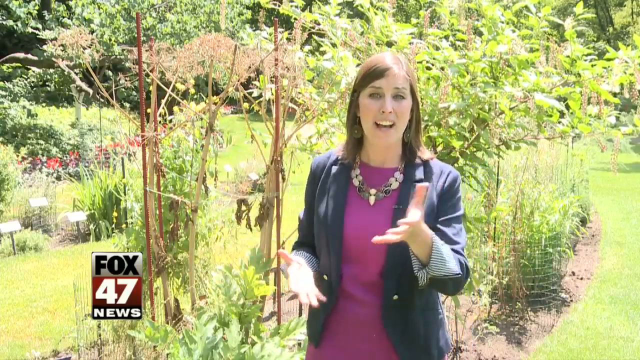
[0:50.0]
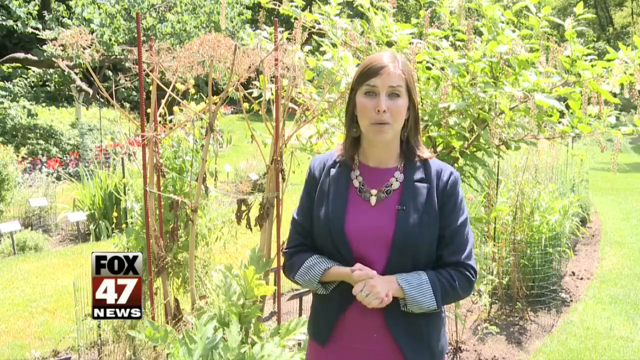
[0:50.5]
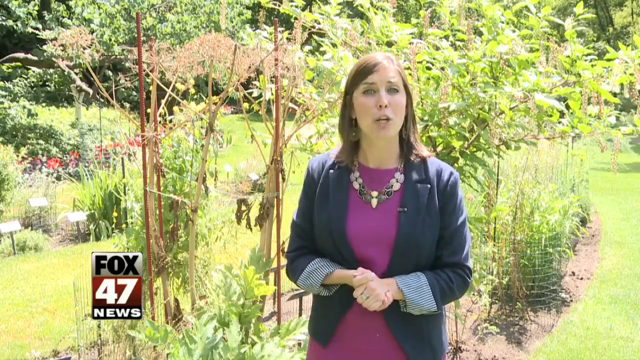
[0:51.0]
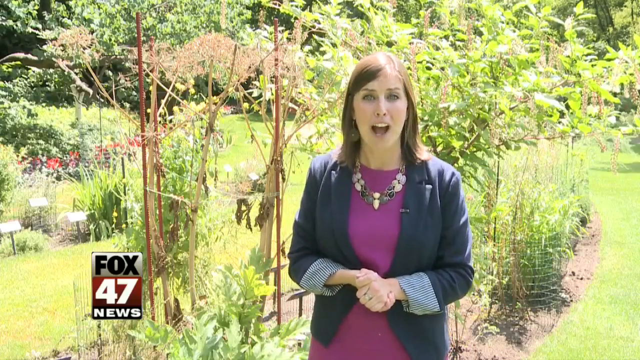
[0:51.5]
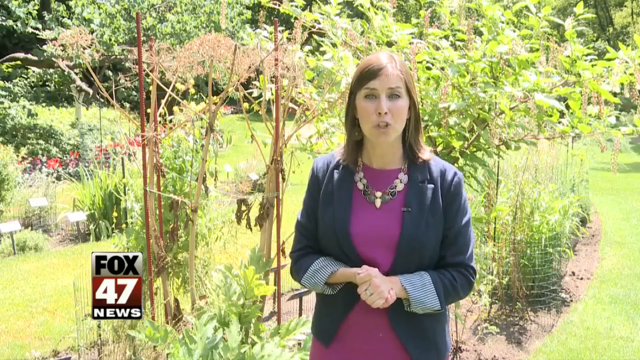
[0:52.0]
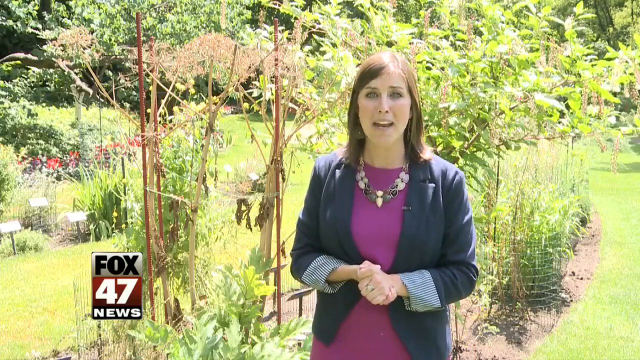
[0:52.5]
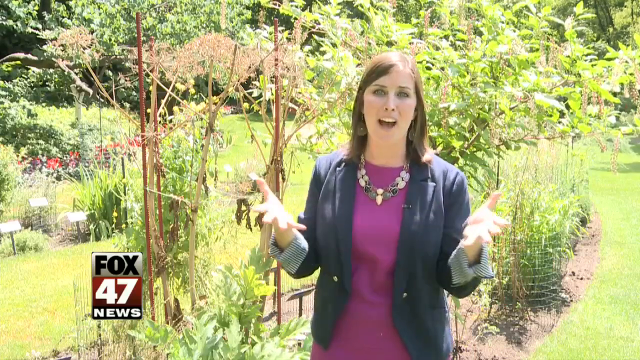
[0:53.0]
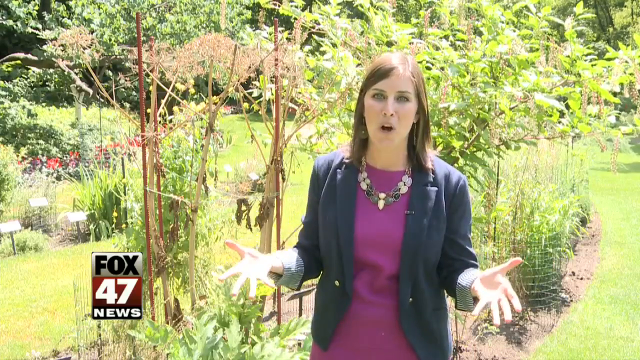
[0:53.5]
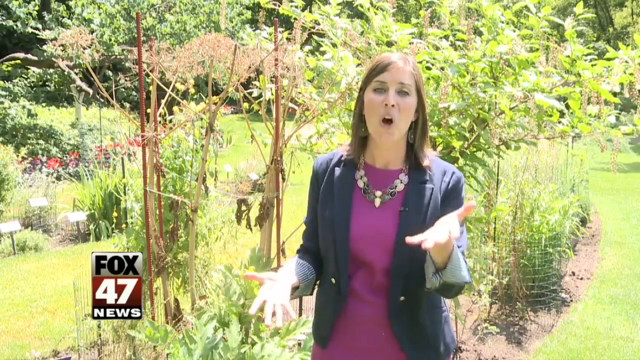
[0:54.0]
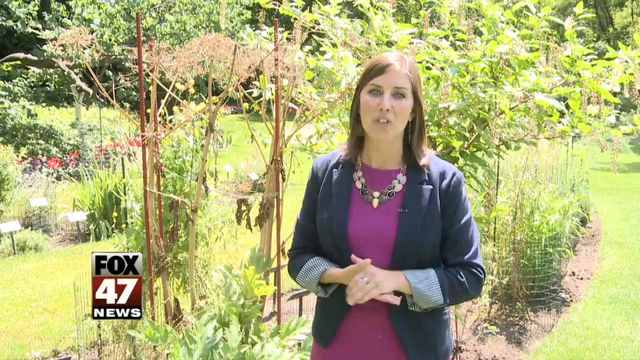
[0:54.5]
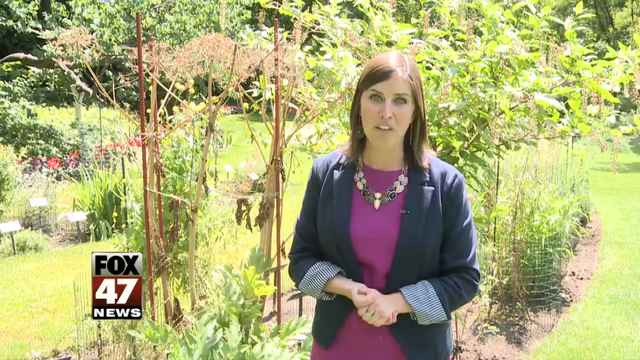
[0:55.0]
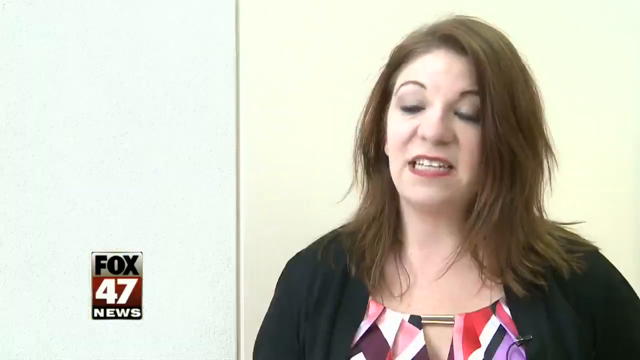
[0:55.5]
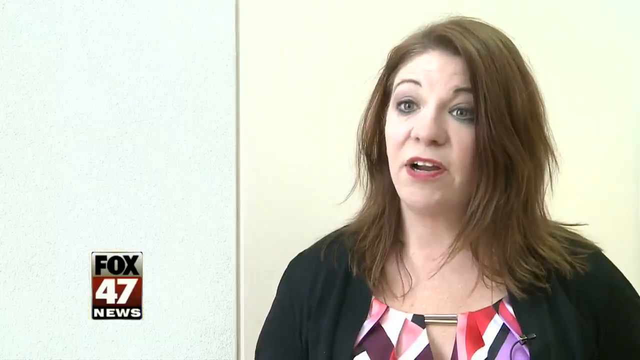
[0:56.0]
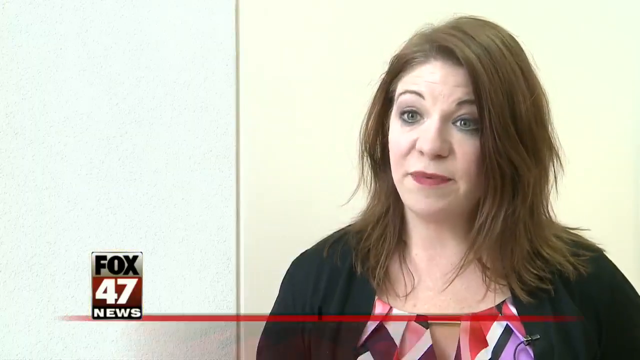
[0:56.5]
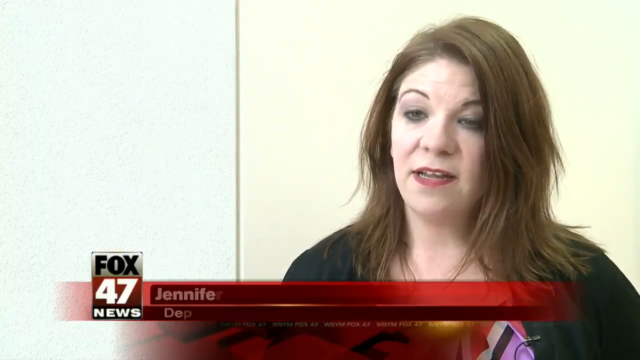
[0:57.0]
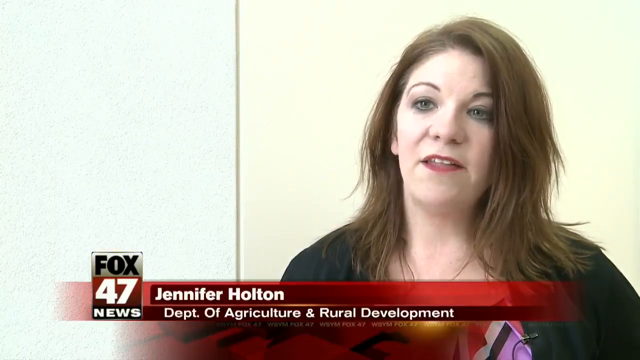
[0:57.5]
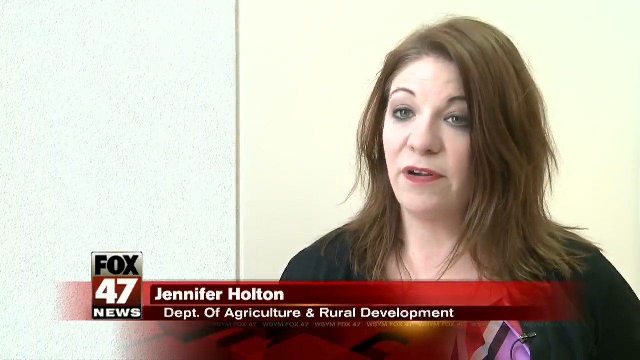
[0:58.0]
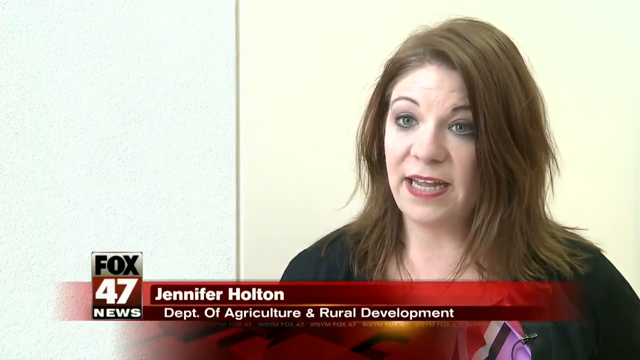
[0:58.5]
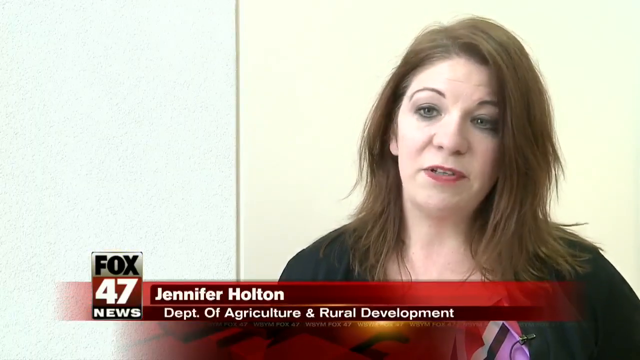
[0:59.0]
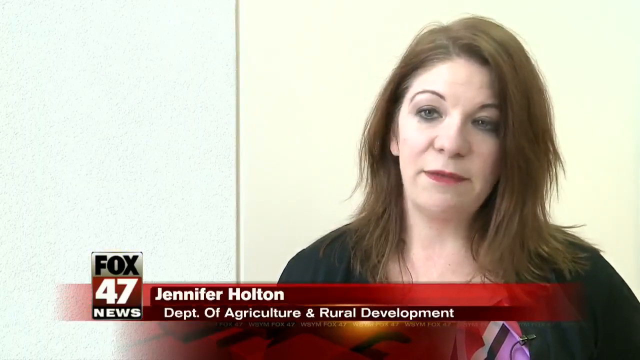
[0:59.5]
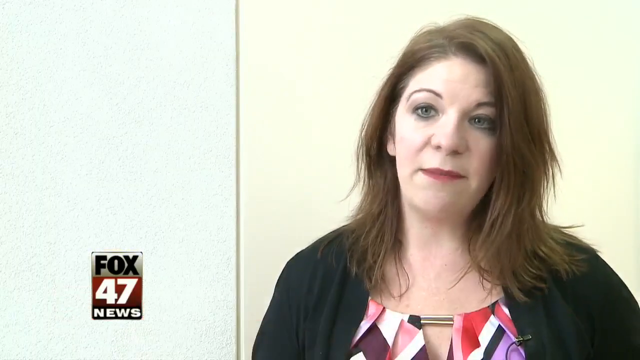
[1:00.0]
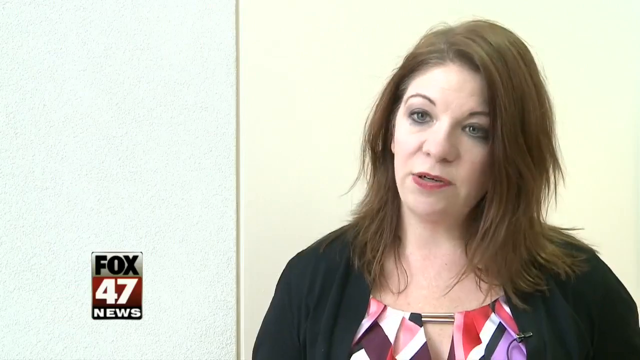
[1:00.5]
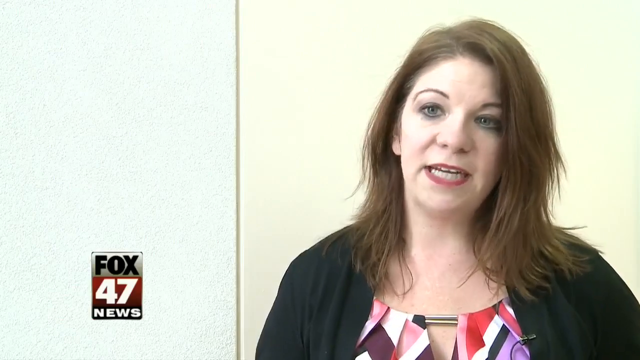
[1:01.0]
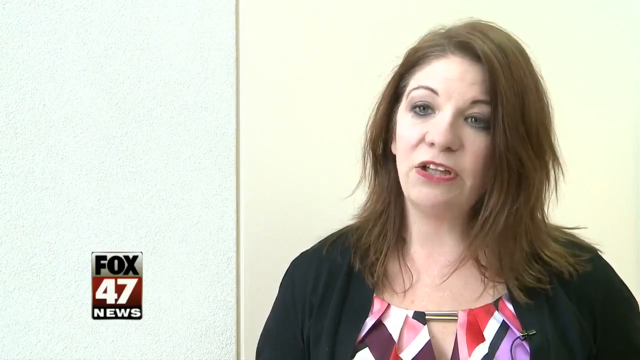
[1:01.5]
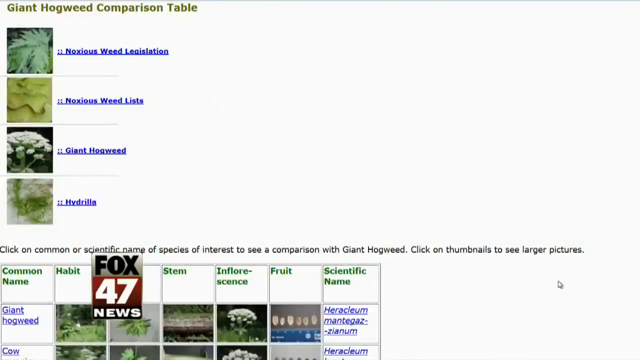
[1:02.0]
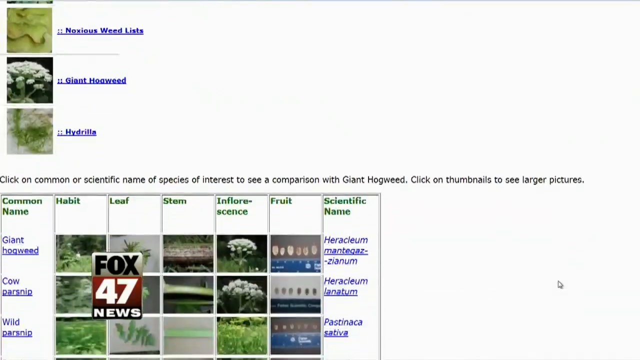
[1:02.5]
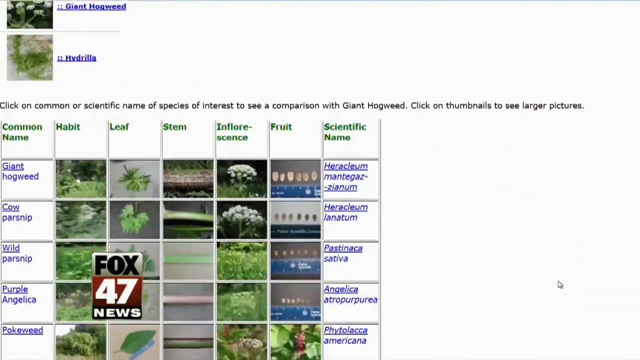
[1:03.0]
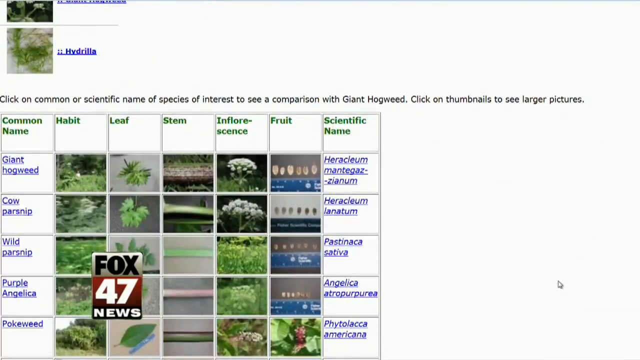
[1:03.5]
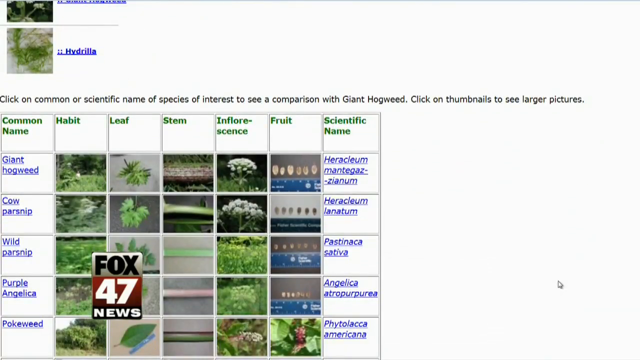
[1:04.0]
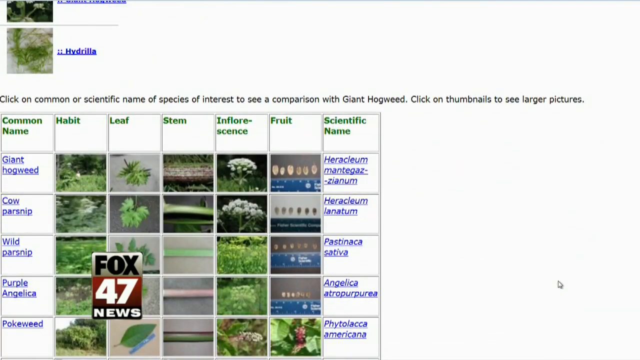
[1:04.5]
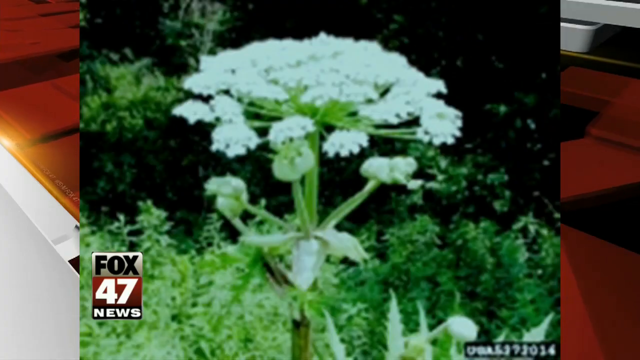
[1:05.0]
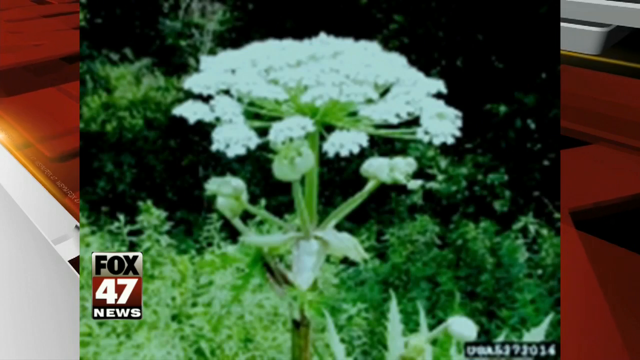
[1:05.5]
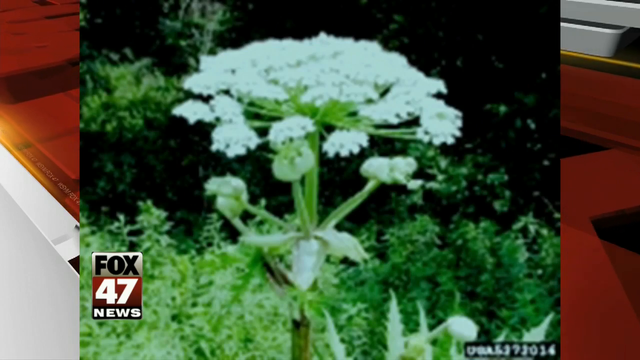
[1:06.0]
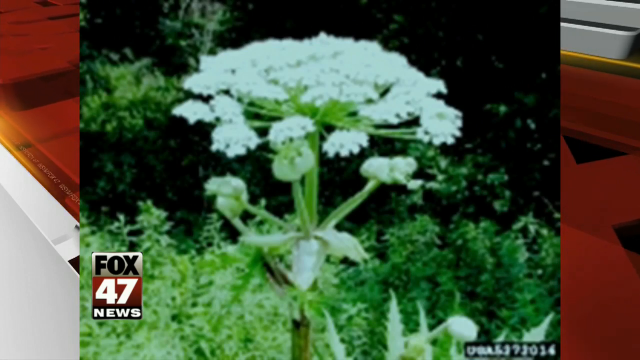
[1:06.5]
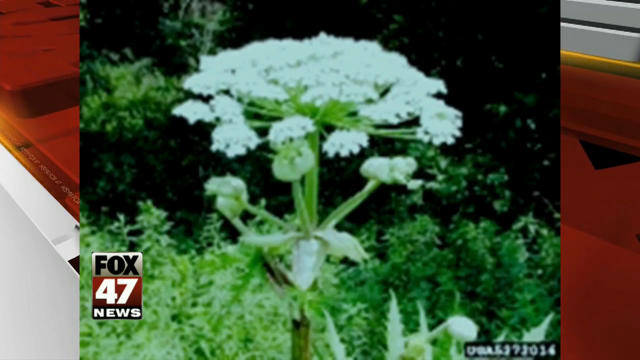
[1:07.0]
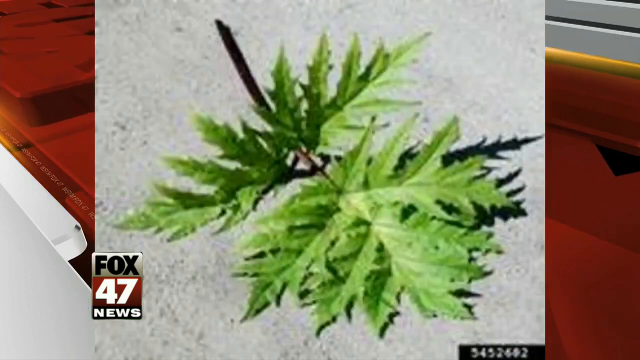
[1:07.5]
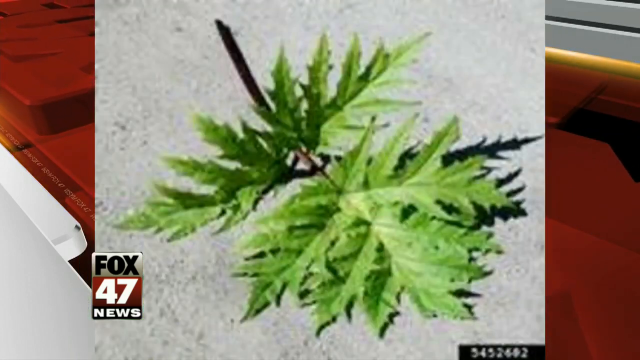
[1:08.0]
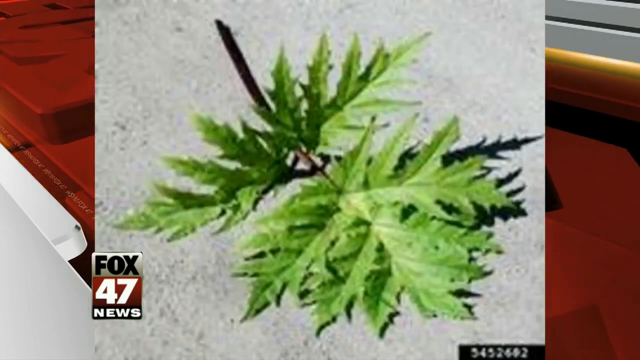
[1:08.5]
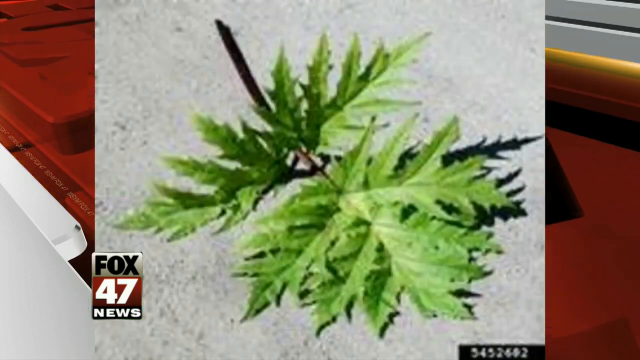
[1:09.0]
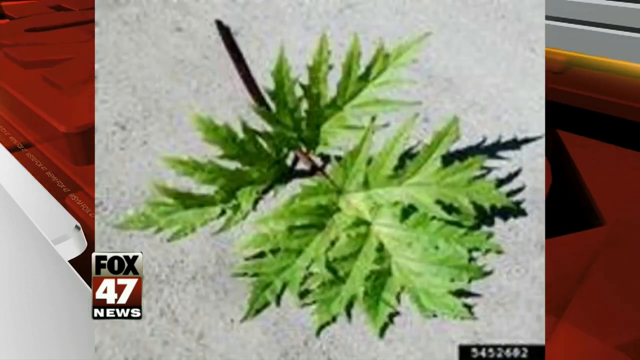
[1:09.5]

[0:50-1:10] A Fox 47 News reporter in a blue coat, purple shirt and gold chain speaks outside in a lush area. She points towards two giant hogweeds with her right hand and towards the camera with her left hand, with many different species of flowers behind her, and is very expressive with her hands. The video then moves to a white woman in a black jersey who is speaking; she is Jennifer Holton, Department of Agriculture and Rural Development. She shakes her head as she speaks. Next, information on a page scrolls from top to bottom, with pictures of various weeds, including a hogweed and another weed. The page looks like it is from a website showing all different types of weeds. The pictures pop up in the center of the screen.